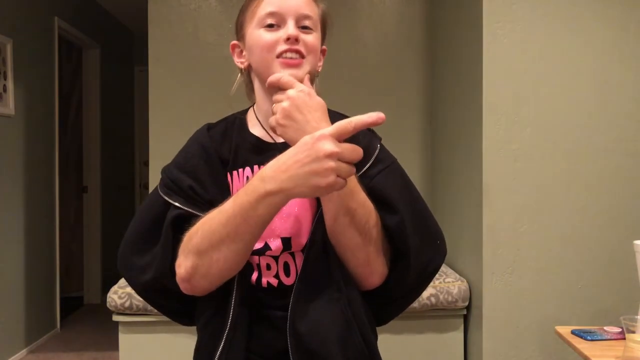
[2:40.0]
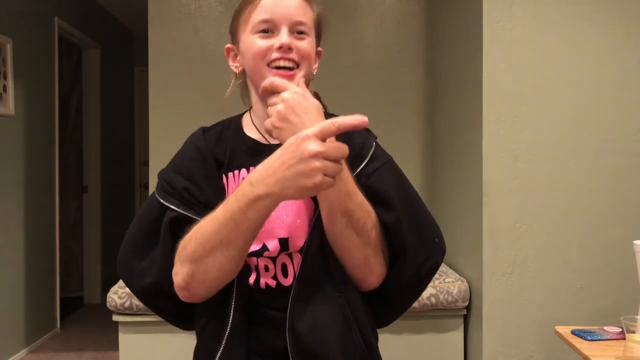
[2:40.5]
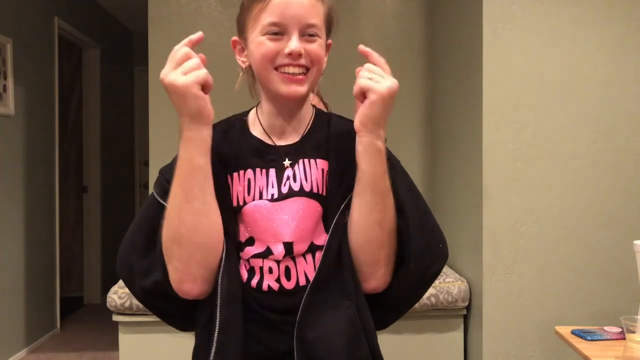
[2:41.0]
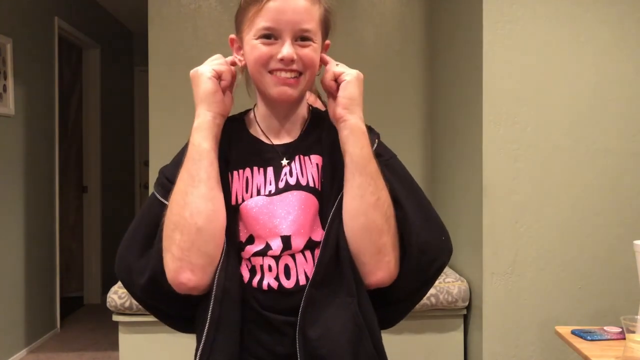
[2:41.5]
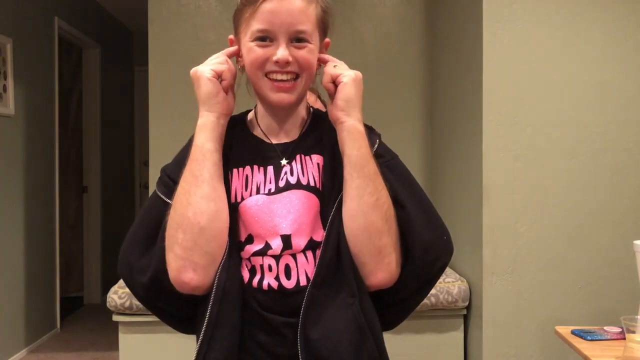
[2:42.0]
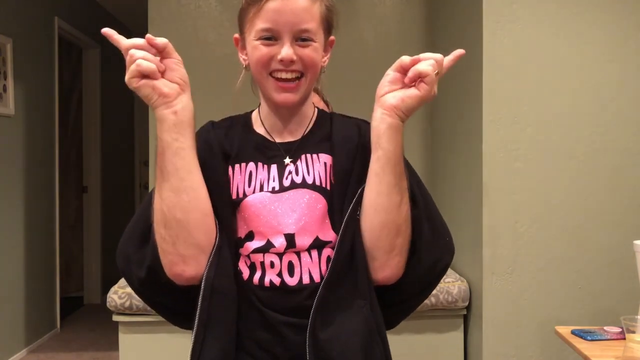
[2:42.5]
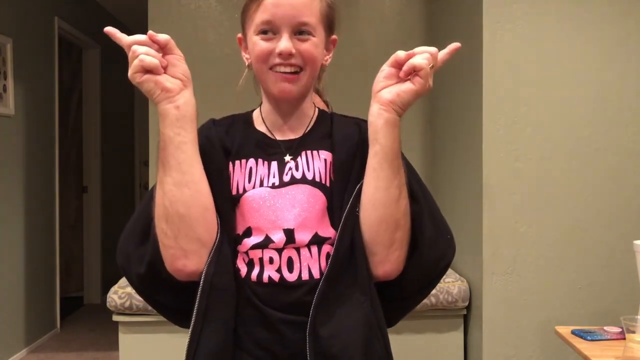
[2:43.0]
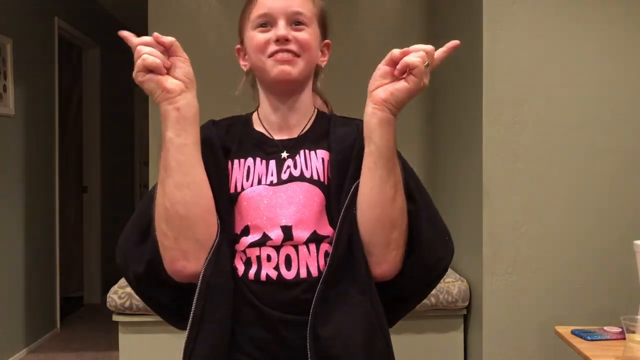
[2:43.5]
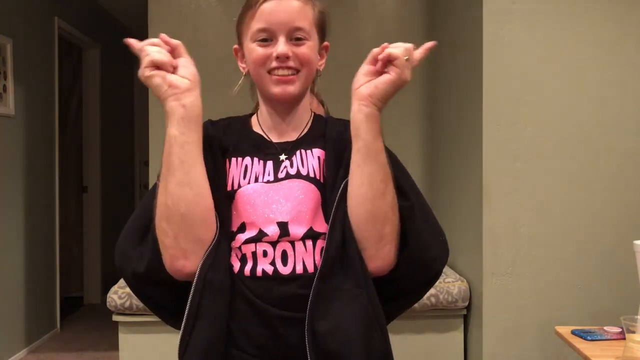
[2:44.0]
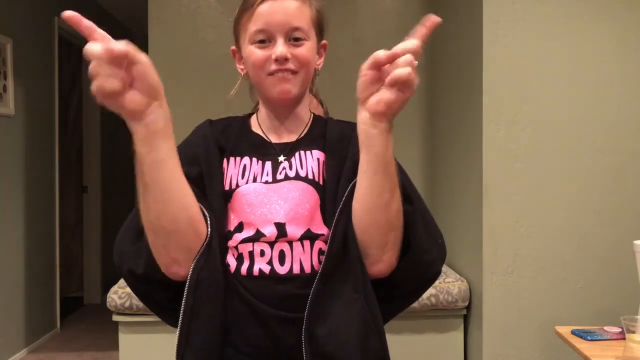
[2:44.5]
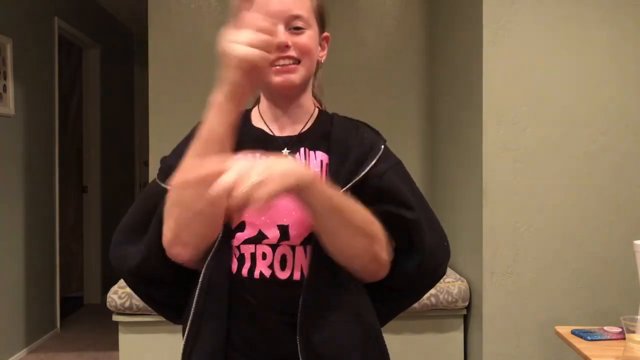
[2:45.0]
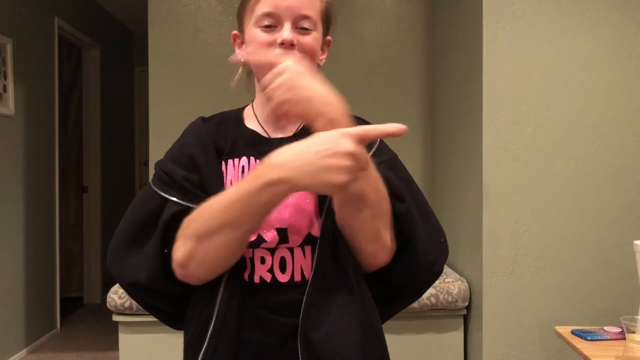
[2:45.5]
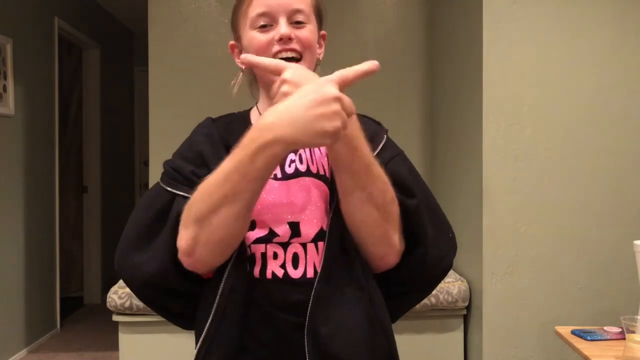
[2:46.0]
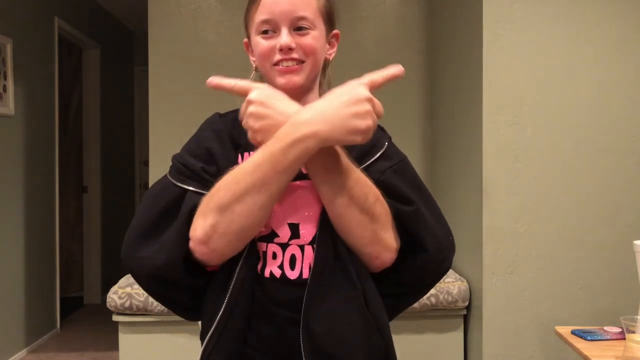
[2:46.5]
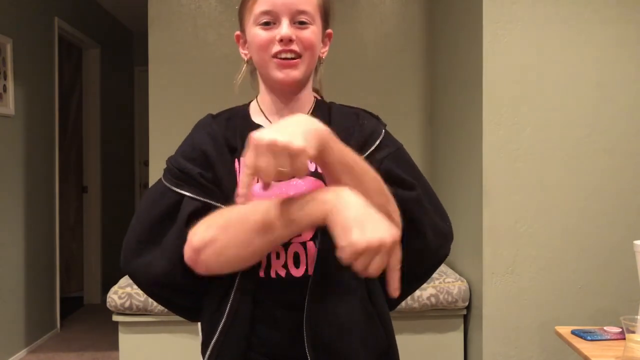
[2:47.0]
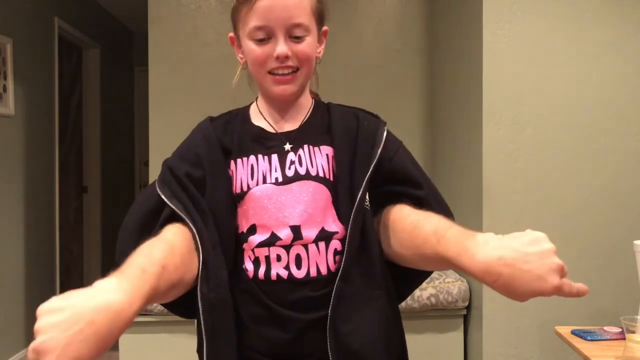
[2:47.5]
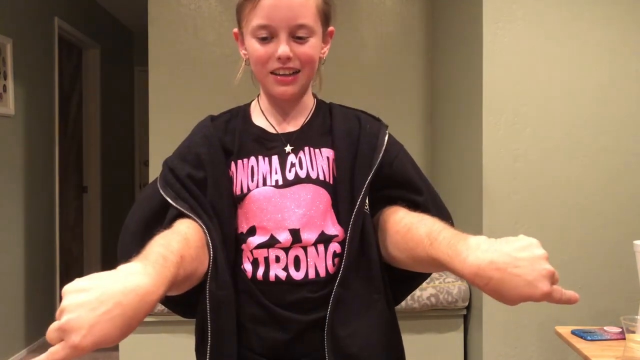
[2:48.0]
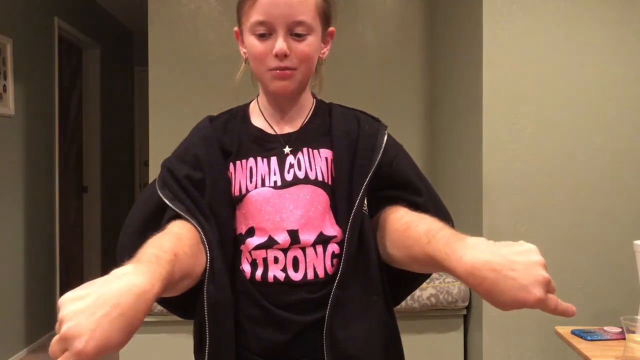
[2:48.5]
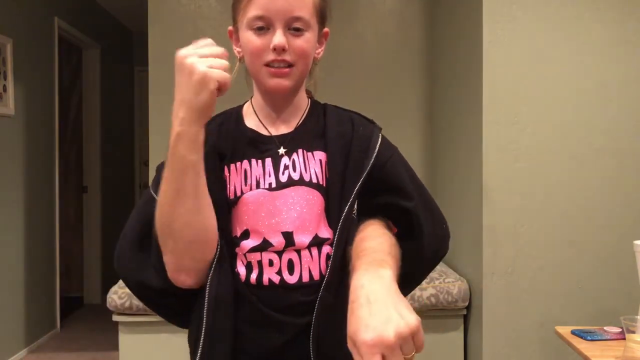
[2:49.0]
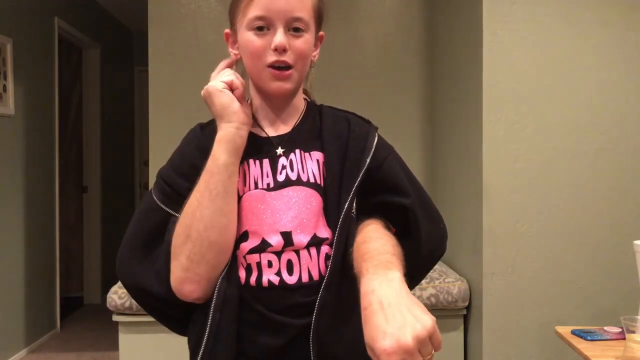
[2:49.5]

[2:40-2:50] A young lady who looks to be about 13 wears what looks like a black sweater or jacket and is apparently in a bedroom. She is playing around and talking. Someone with her is playing a prank: the other person is possibly seated right behind her, pretending that their arms are hers. Those arms scratch her face, tickle her ears, and point in opposite directions, making her laugh and giggle.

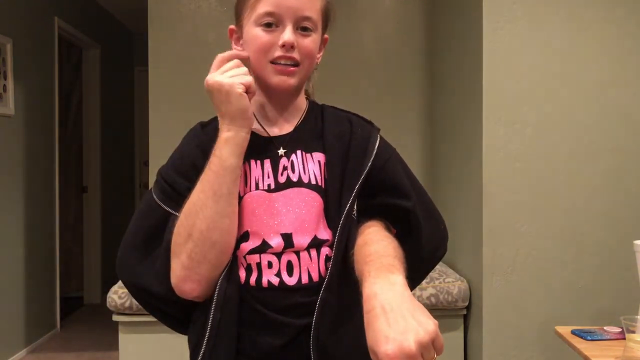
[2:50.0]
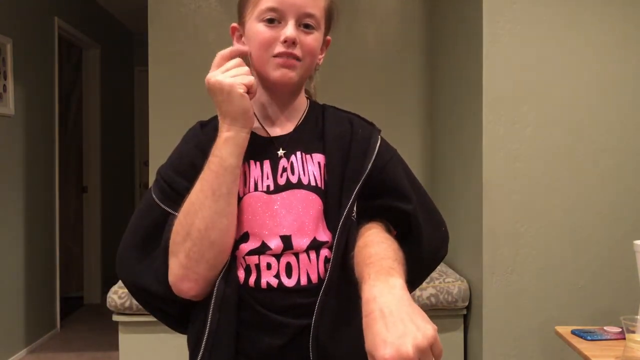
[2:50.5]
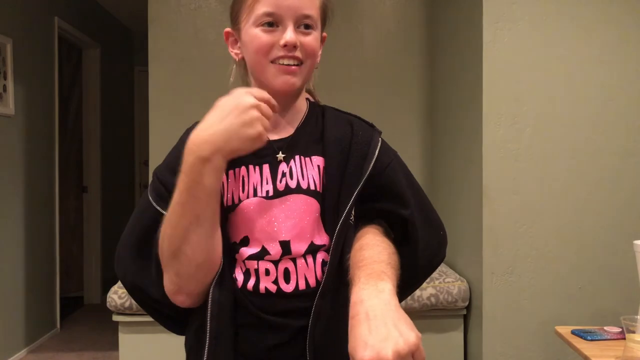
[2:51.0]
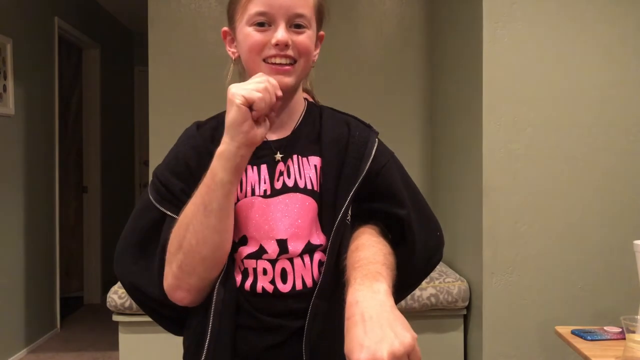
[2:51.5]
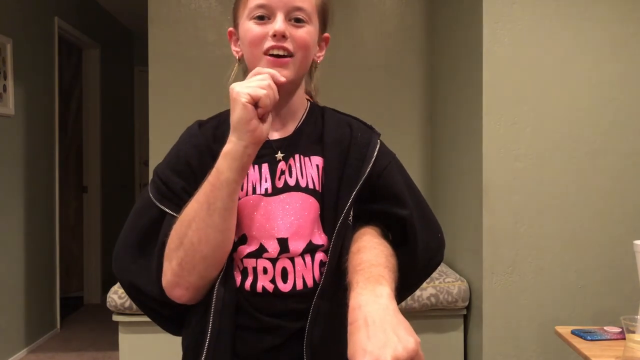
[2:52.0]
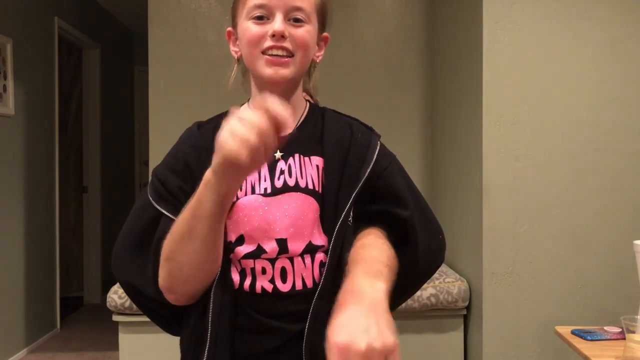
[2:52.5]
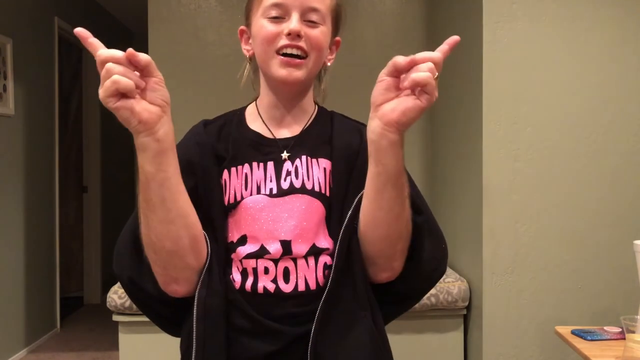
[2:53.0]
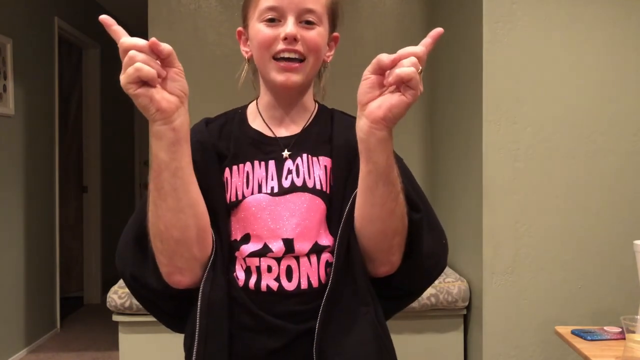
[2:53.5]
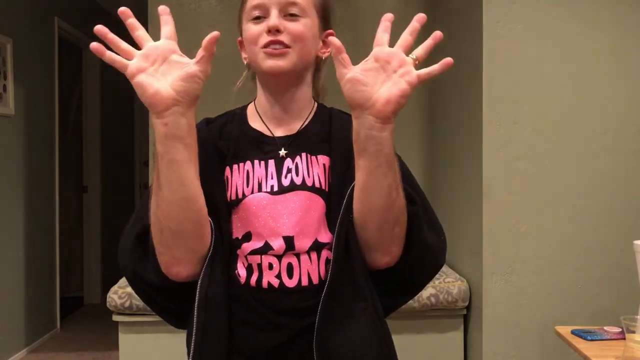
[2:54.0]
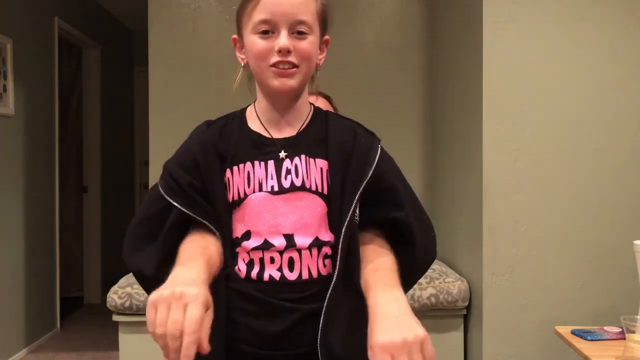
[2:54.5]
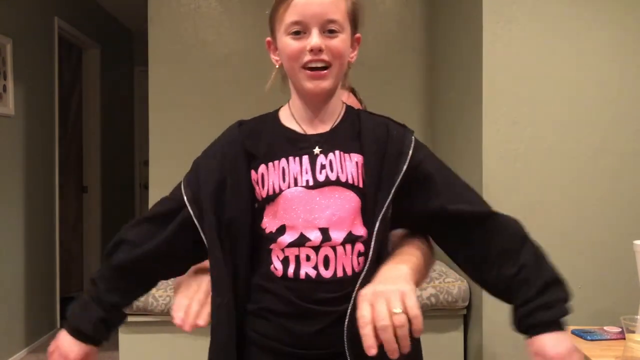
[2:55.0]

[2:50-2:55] The prank on the young lady continues. Someone else's arms pretend to be hers, scratching her face, tickling her and her hand, and doing funny things while she tries to act normal and is teased into laughing. The person doing it looks to be an adult, possibly an adult male, given the size of the hands, and is probably her father.